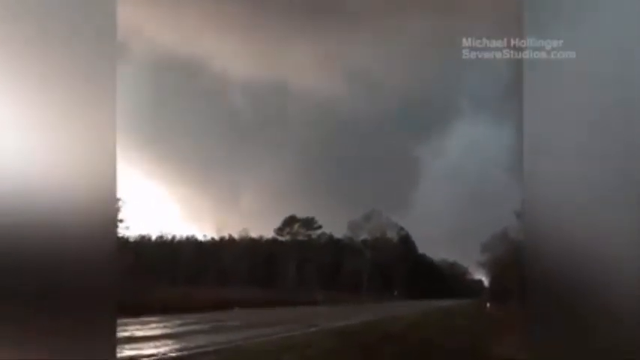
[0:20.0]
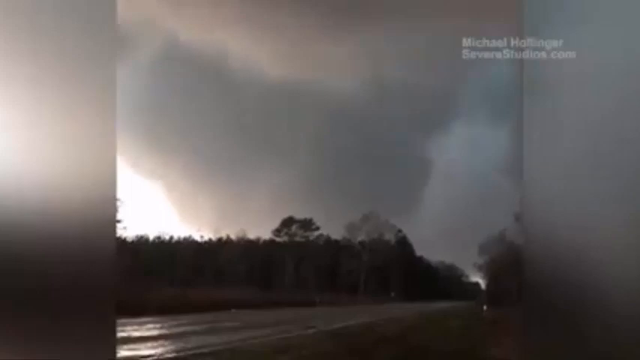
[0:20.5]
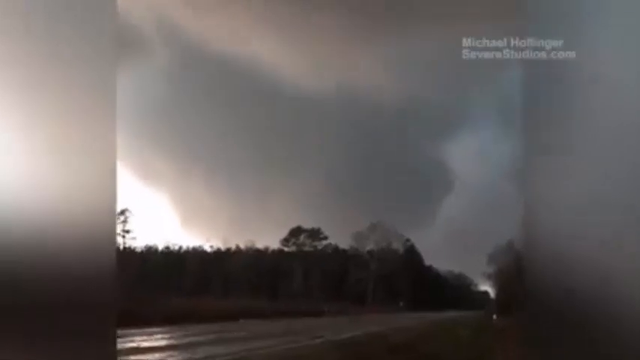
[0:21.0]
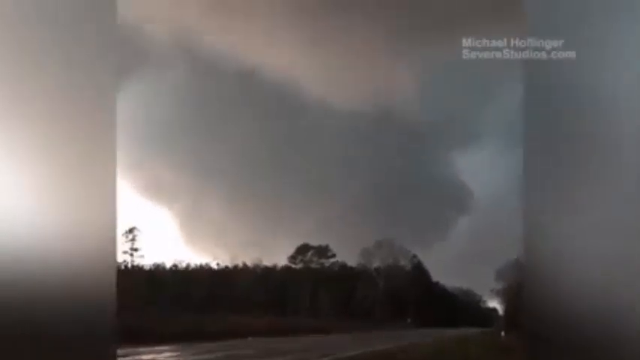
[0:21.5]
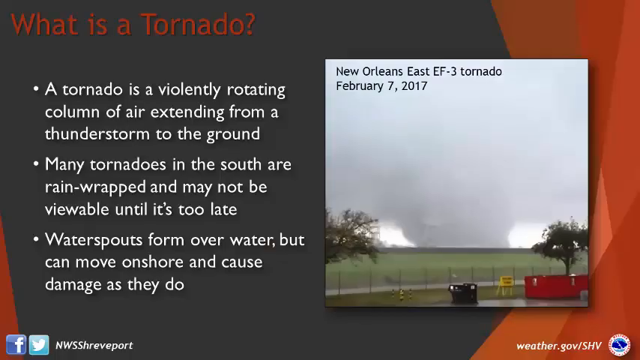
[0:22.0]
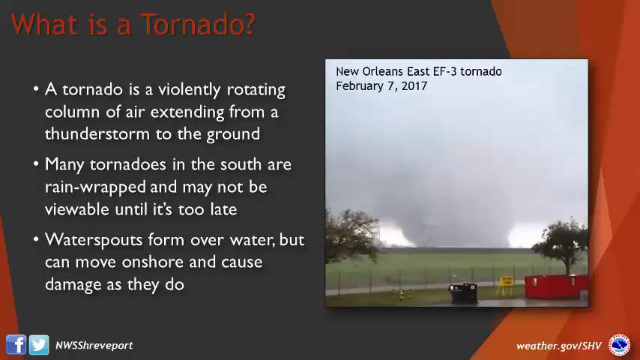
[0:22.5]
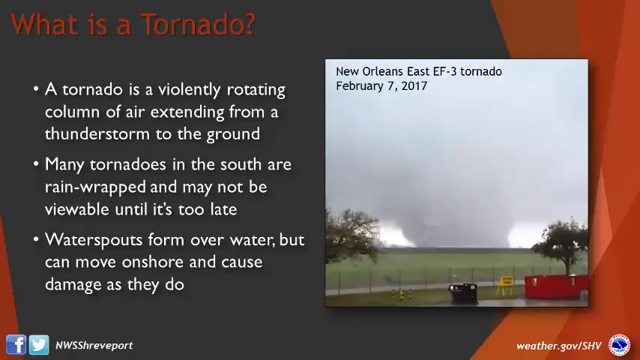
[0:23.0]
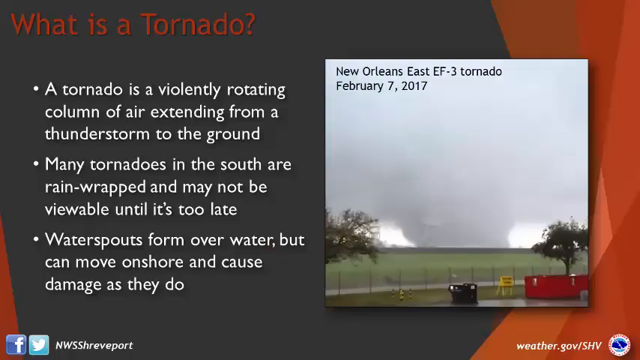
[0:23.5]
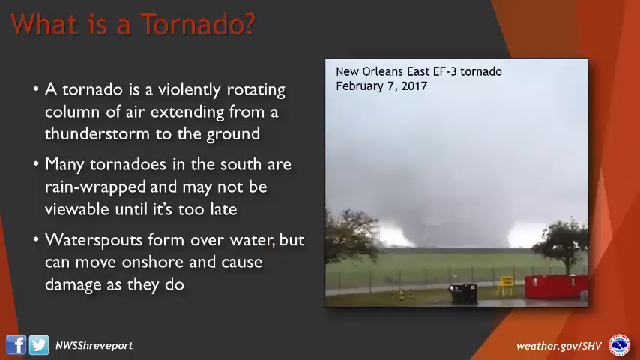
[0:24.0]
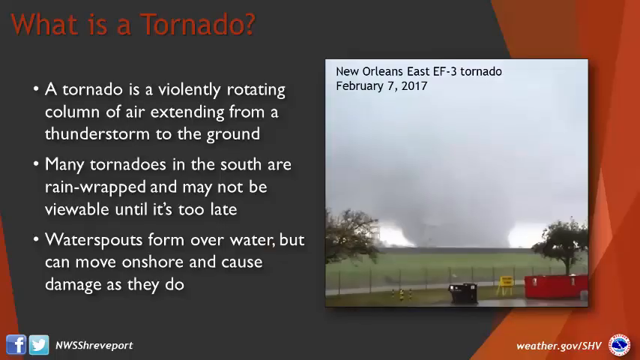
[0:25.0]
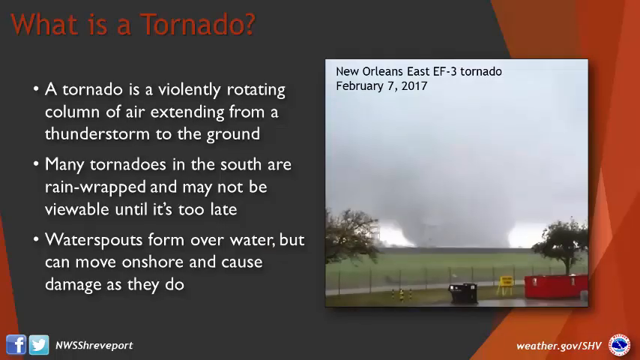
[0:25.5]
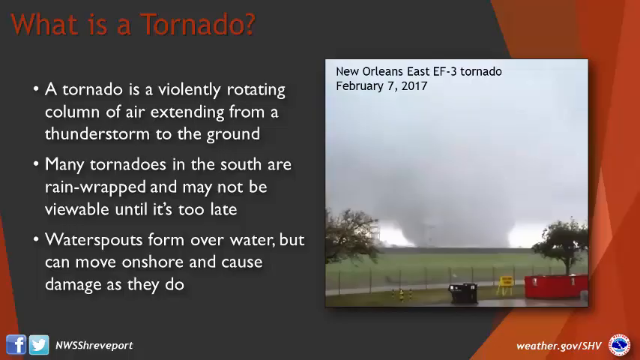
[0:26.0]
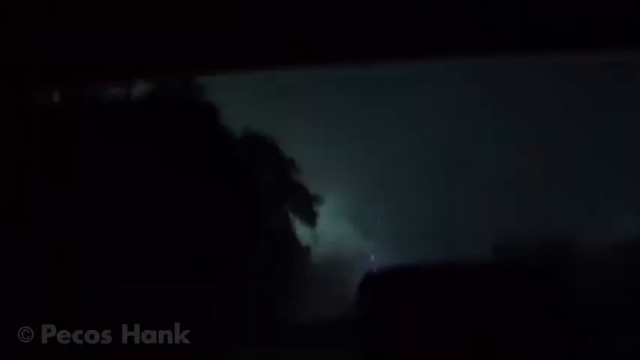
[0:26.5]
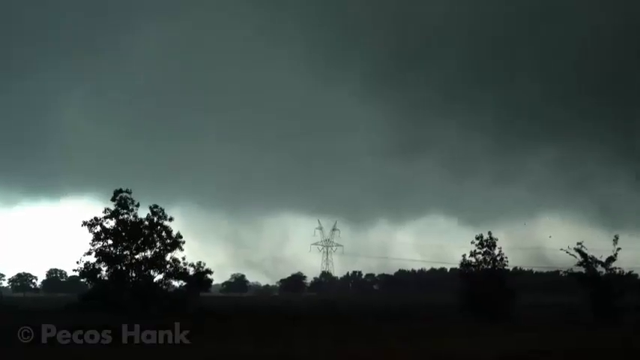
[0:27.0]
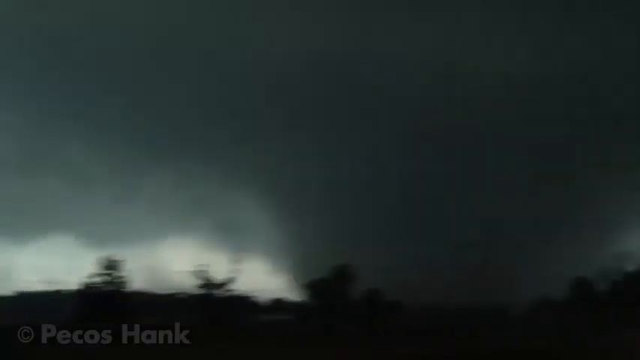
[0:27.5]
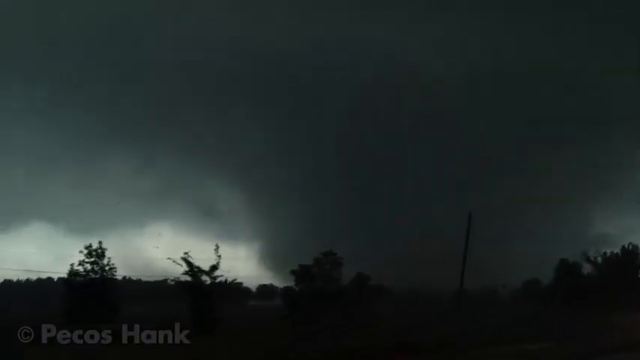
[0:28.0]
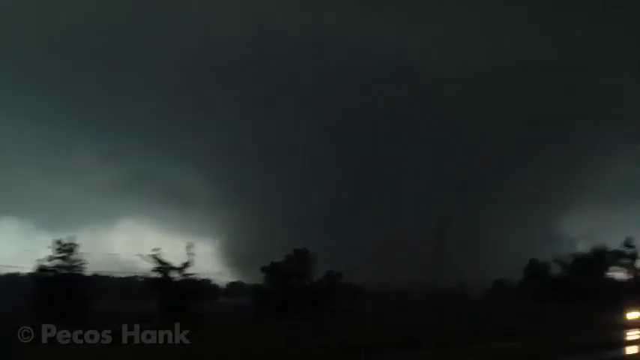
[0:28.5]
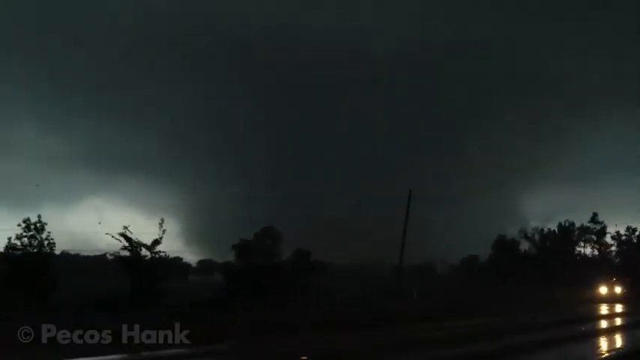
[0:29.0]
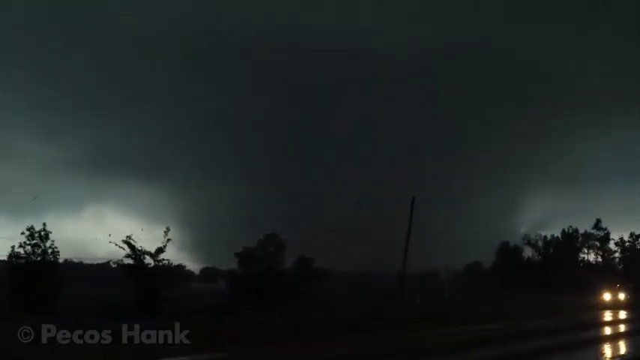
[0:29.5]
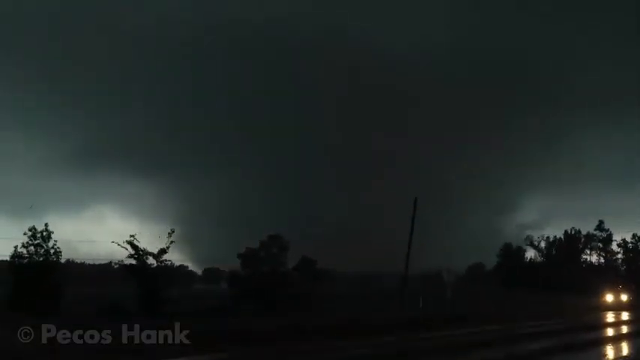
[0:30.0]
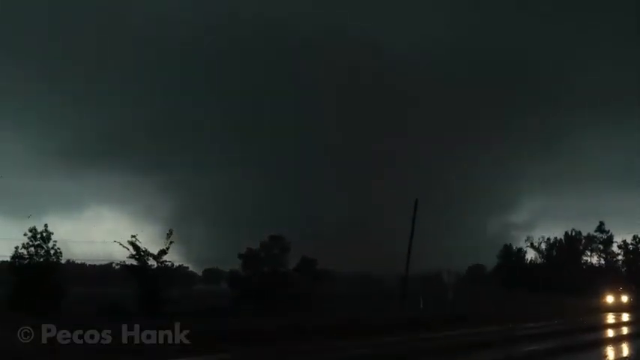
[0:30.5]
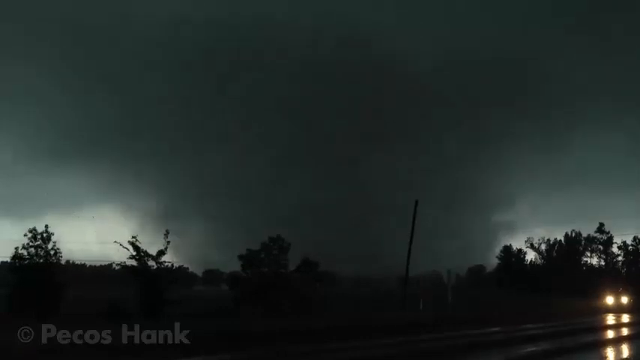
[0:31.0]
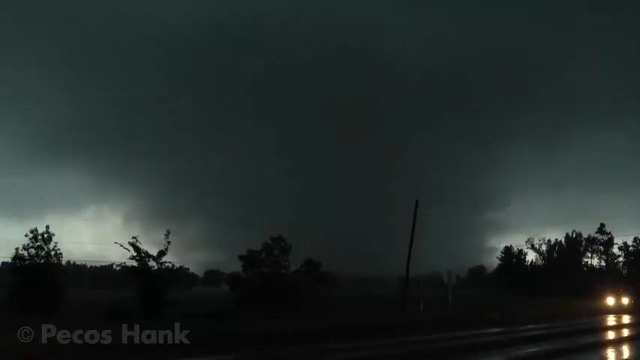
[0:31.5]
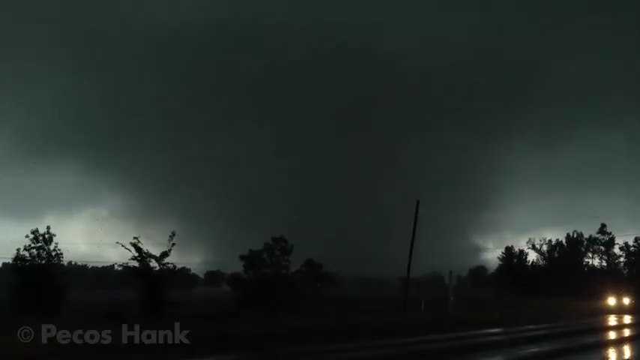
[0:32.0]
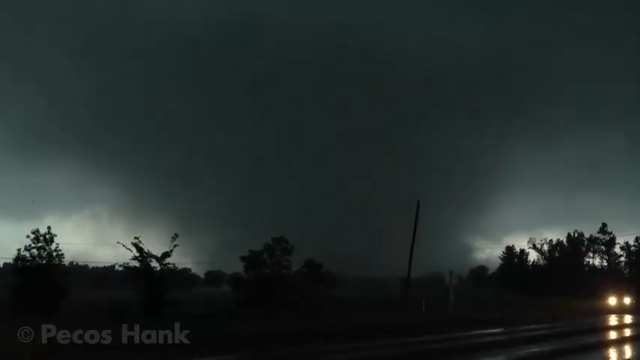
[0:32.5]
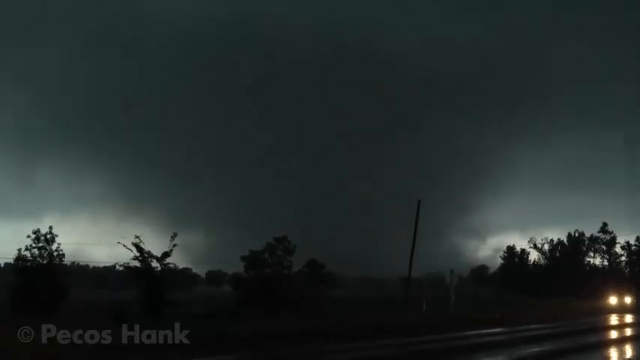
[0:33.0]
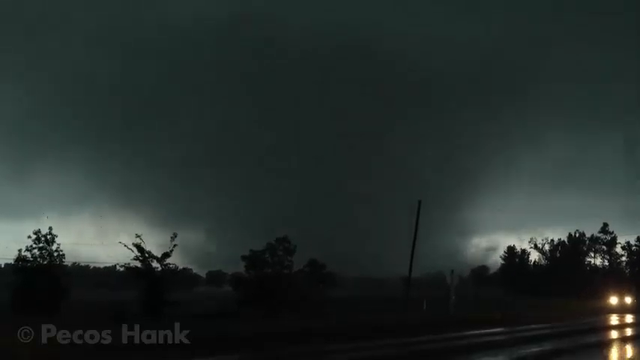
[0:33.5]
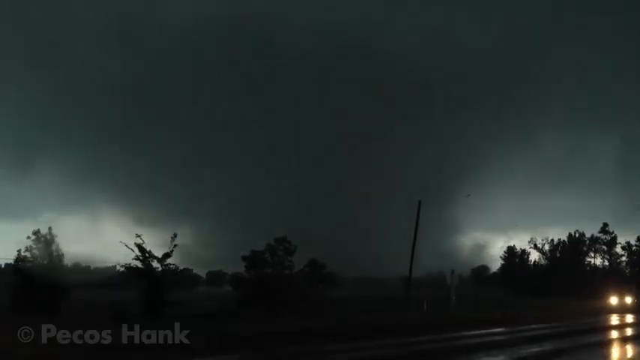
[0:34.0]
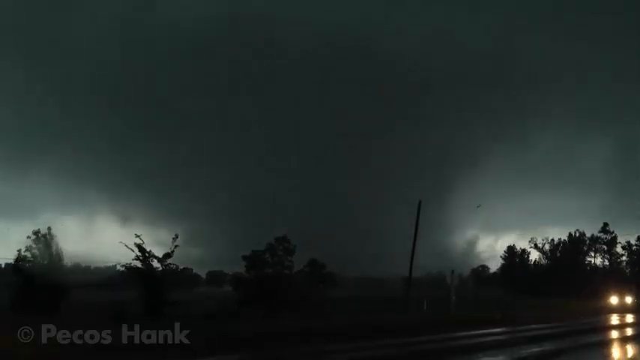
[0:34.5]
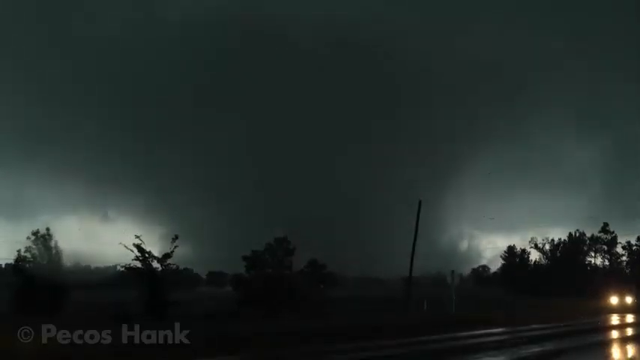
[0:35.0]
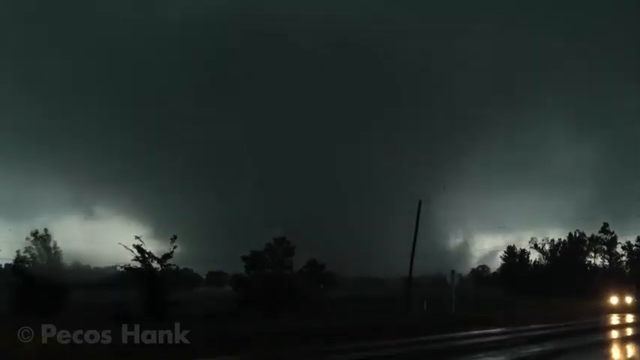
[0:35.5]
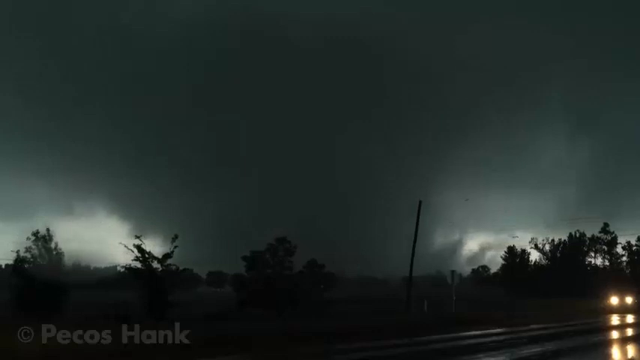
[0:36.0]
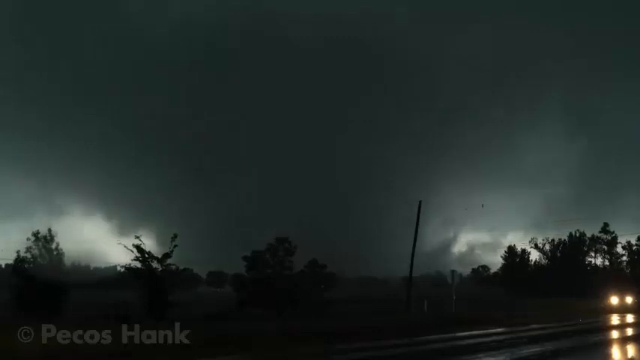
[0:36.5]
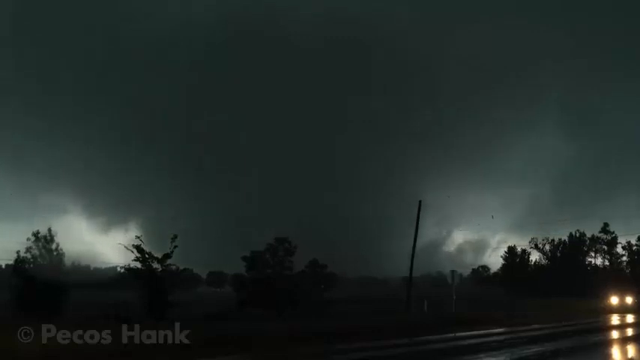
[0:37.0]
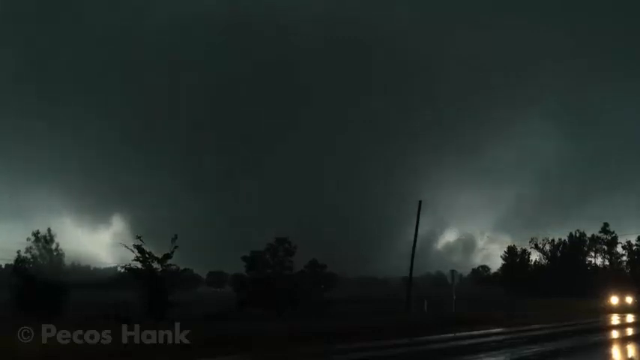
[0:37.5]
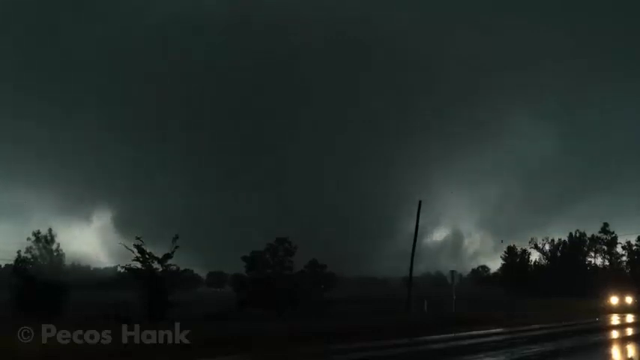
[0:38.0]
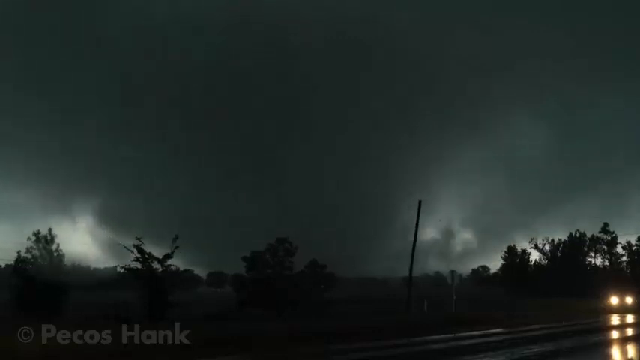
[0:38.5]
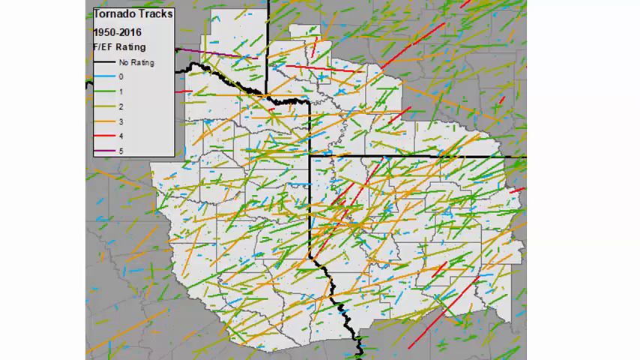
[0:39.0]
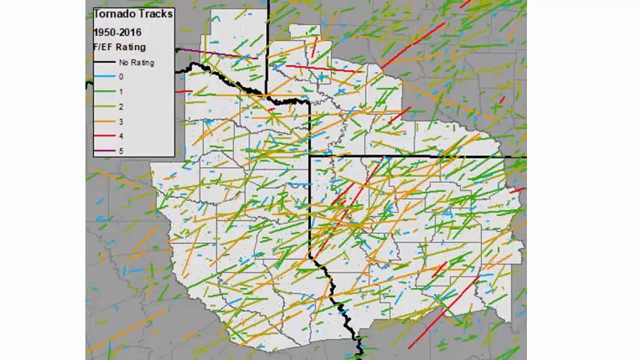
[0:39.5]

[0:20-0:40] A large forest area lines a roadside, and behind it a very large tornado approaches the camera's view. The video cuts to a slide that reads: "What is a tornado? A tornado is a violently rotating column of air extending from a thunderstorm to the ground. Many tornadoes in the south are rain-wrapped and may not be viewable until it's too late. Water spouts form over water, but can move on shore and cause damage as they do." On the right-hand side of the screen is another image of a very large tornado approaching an open field, labeled "New Orleans East EF3 Tornado, February 7, 2017." The video then cuts to footage of another very large tornado. The sky is very dark, and only shadows of the ground and trees below are visible. The camera pans over to the very large, very dark tornado in the distance, and a car drives down the road toward the camera as the tornado moves very fast to the left of the screen. The video then cuts to a map image of what appears to be a location between multiple states, divided by state lines, with a key labeled "Tornado Tracks."